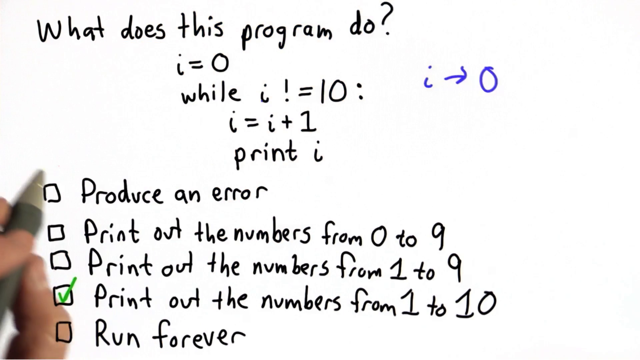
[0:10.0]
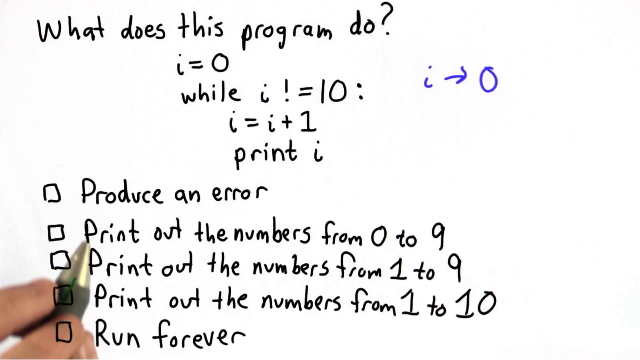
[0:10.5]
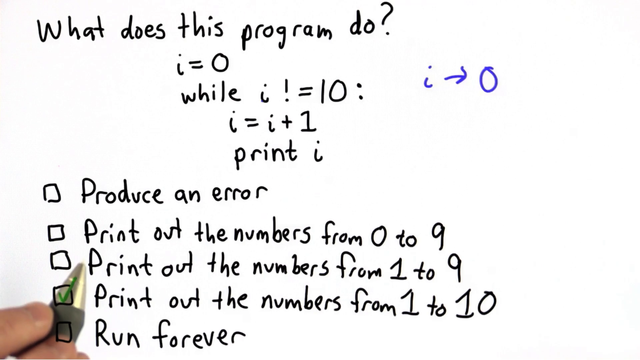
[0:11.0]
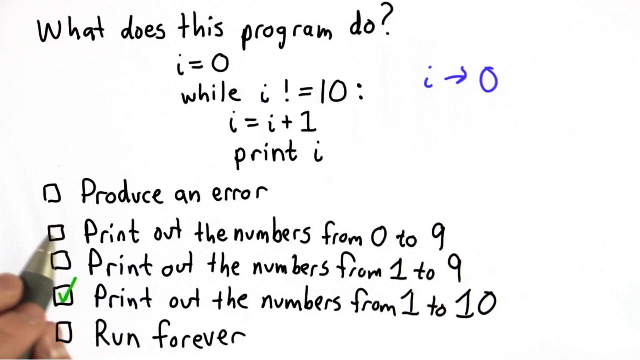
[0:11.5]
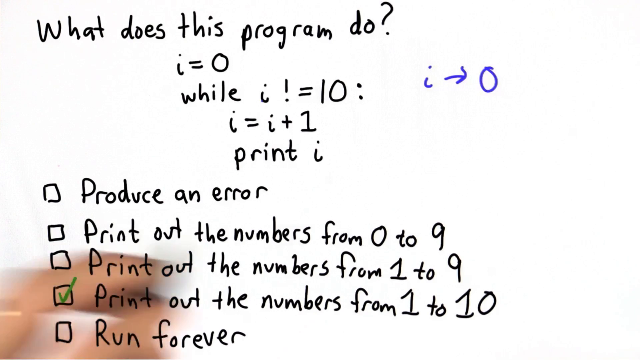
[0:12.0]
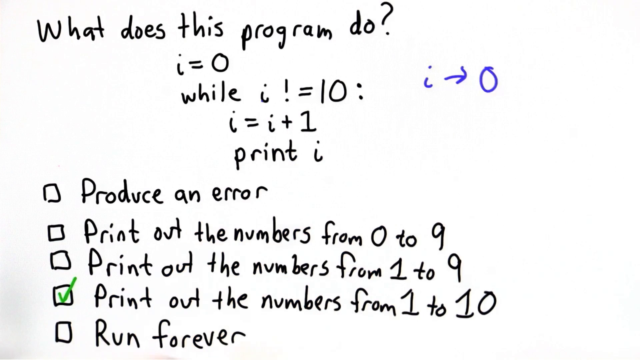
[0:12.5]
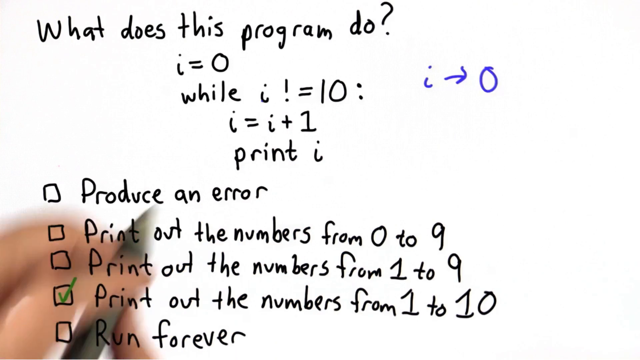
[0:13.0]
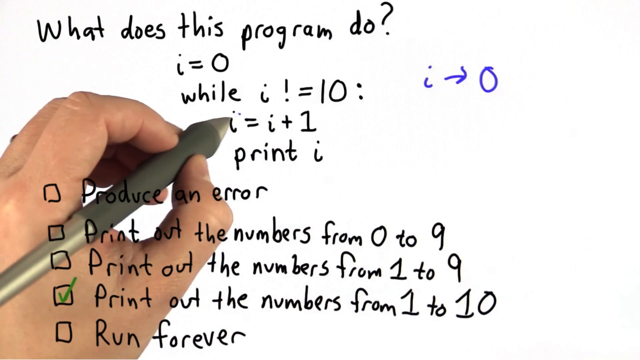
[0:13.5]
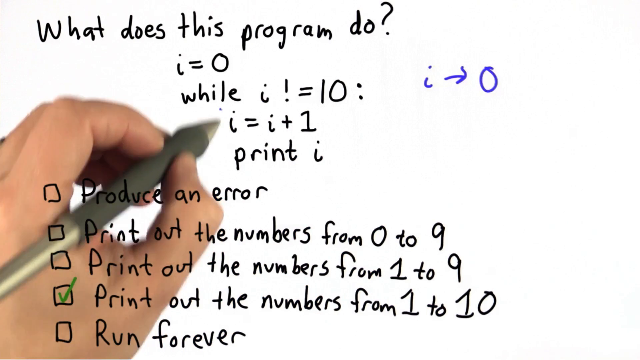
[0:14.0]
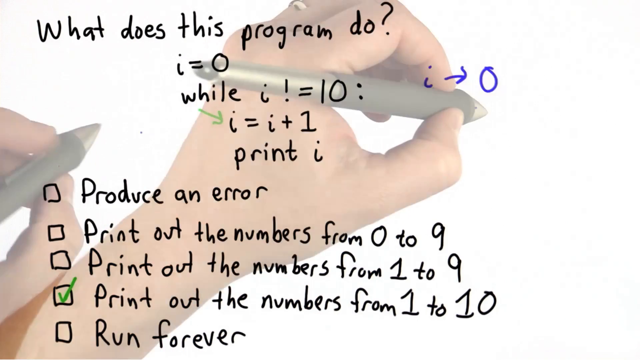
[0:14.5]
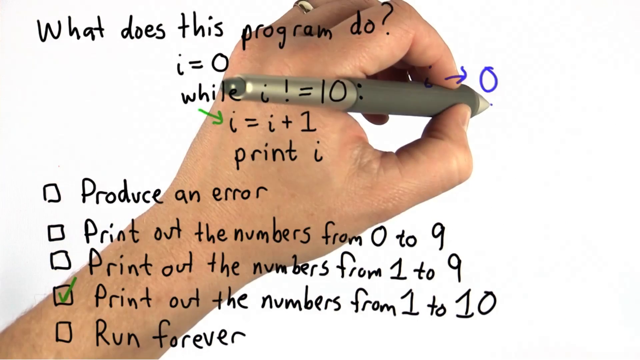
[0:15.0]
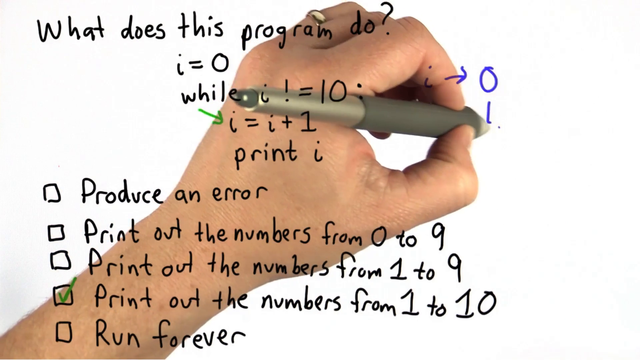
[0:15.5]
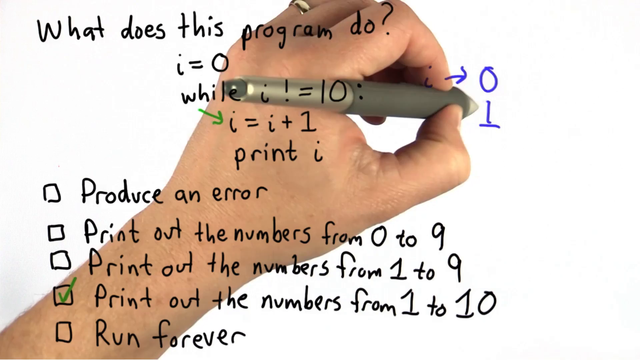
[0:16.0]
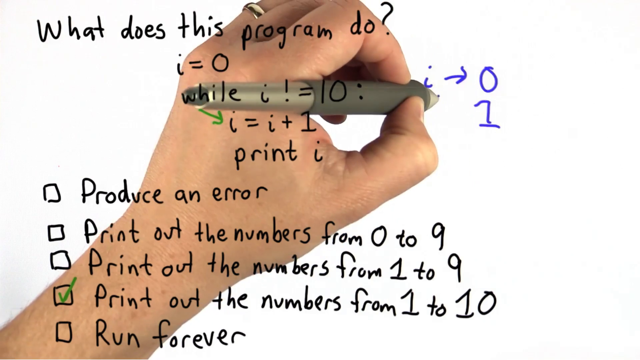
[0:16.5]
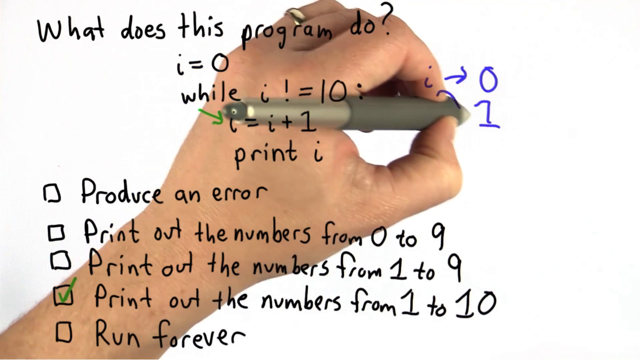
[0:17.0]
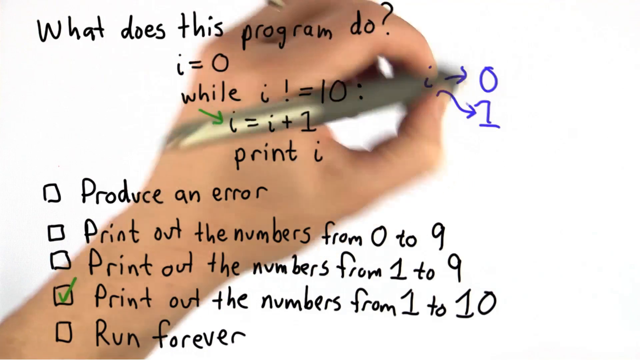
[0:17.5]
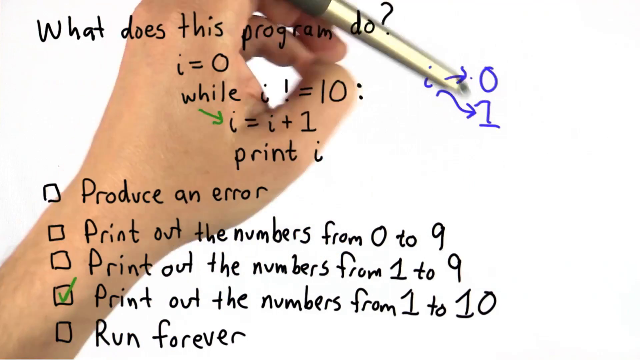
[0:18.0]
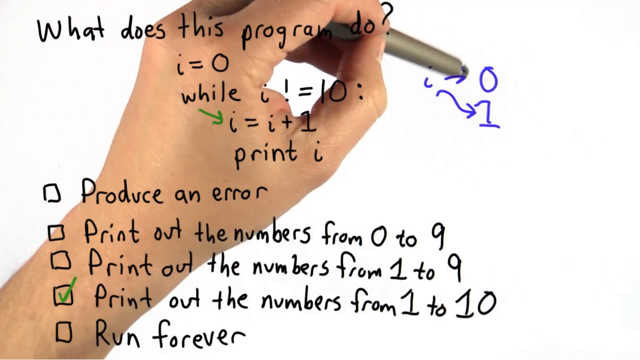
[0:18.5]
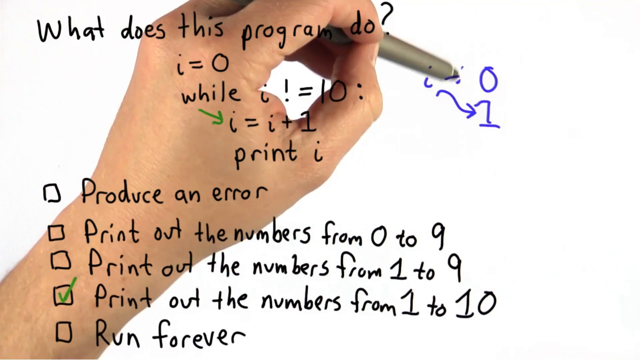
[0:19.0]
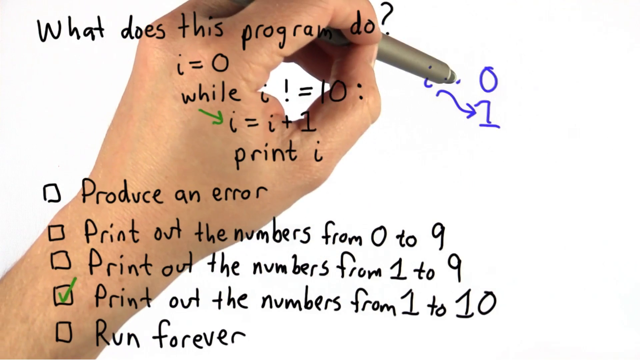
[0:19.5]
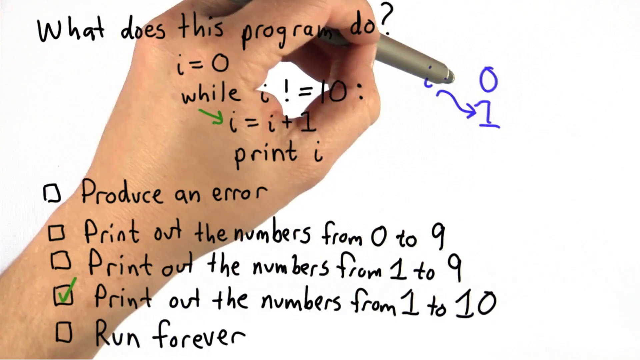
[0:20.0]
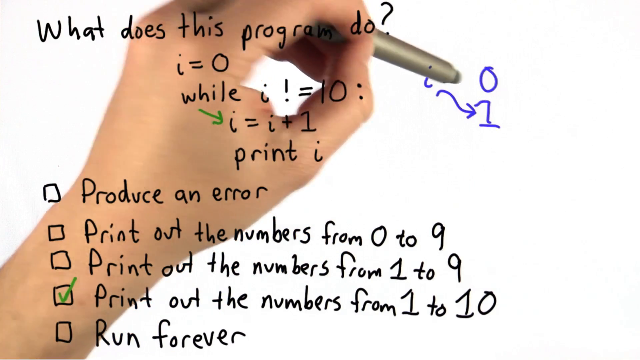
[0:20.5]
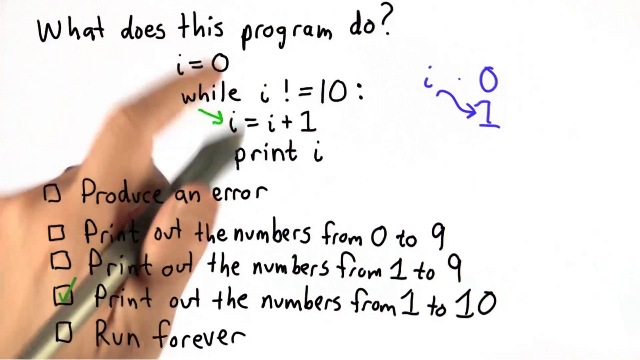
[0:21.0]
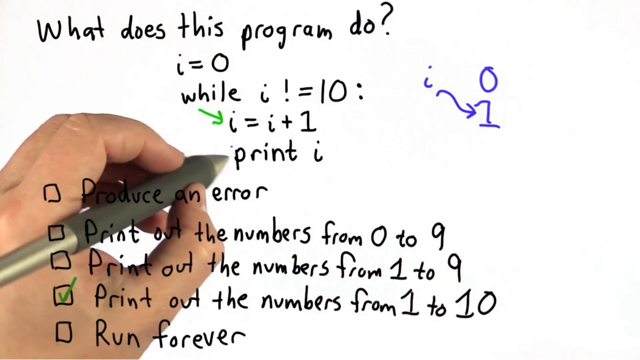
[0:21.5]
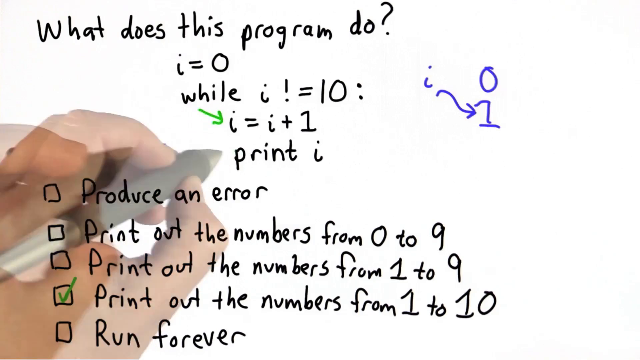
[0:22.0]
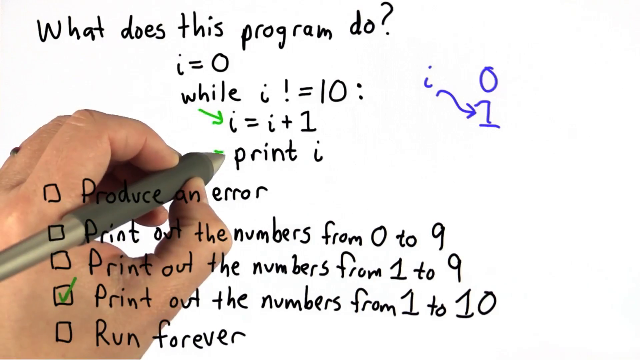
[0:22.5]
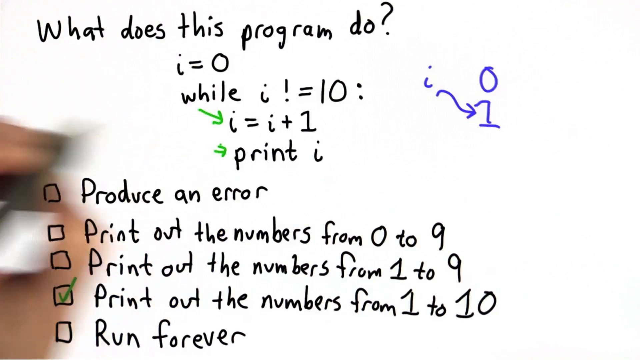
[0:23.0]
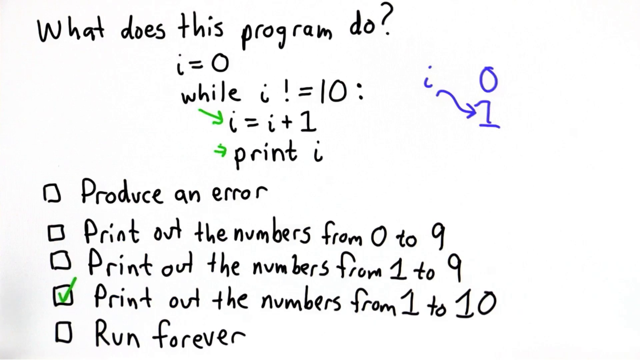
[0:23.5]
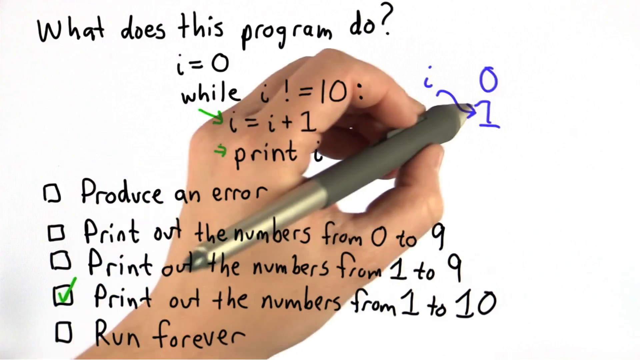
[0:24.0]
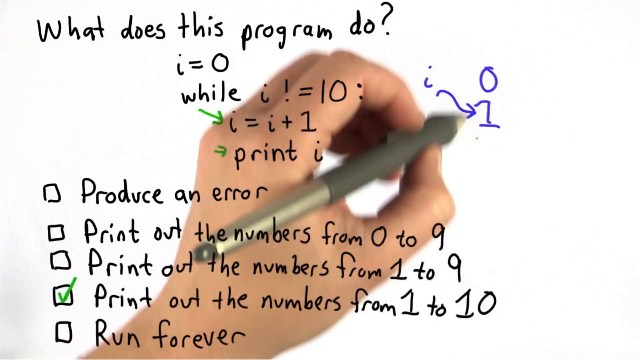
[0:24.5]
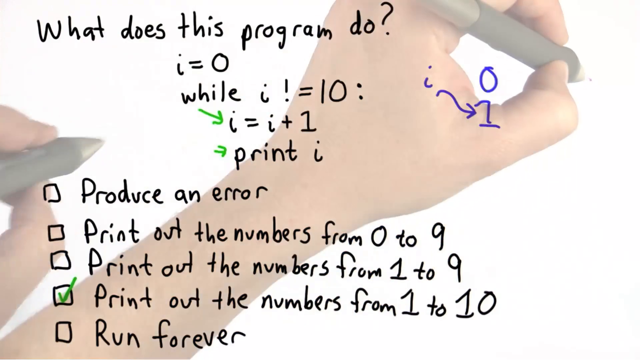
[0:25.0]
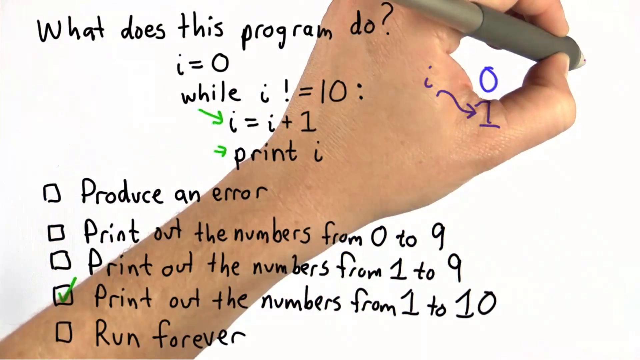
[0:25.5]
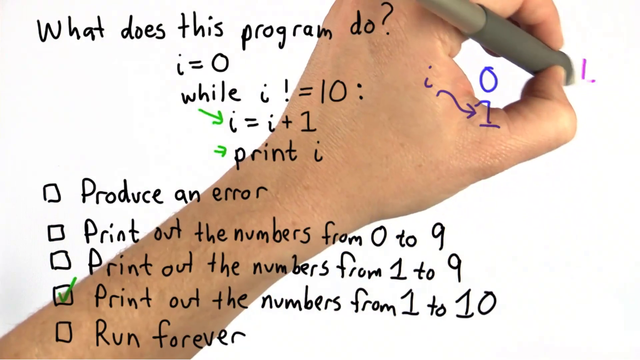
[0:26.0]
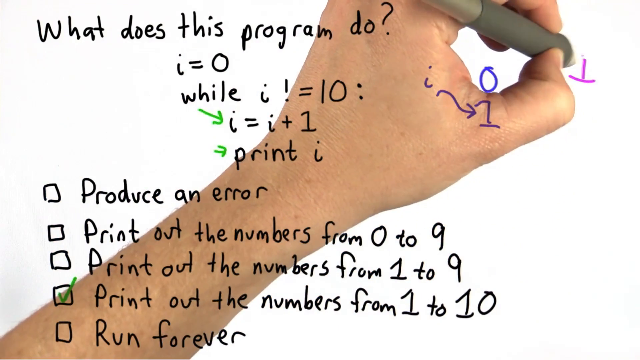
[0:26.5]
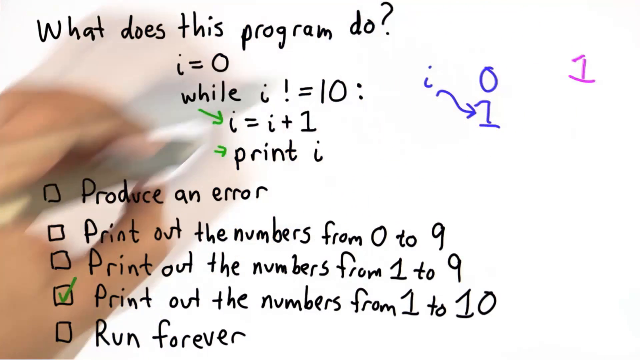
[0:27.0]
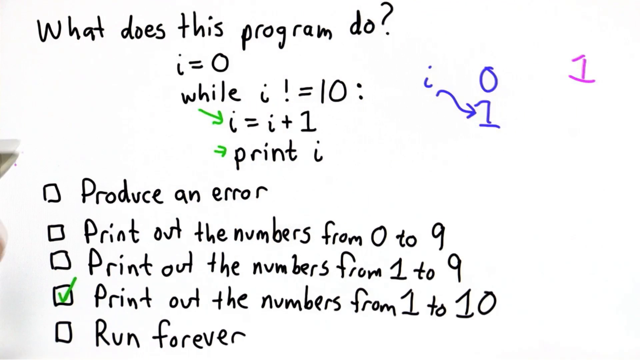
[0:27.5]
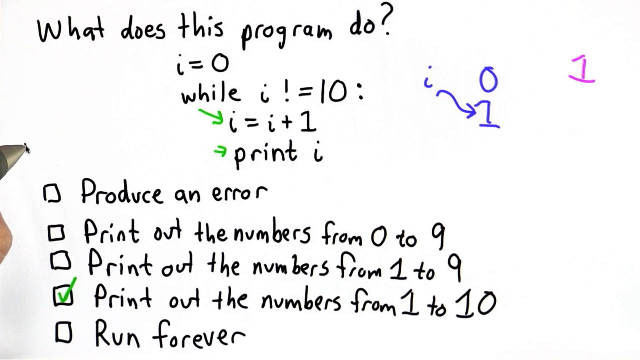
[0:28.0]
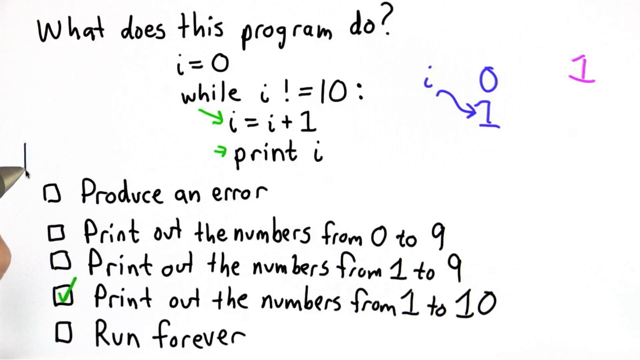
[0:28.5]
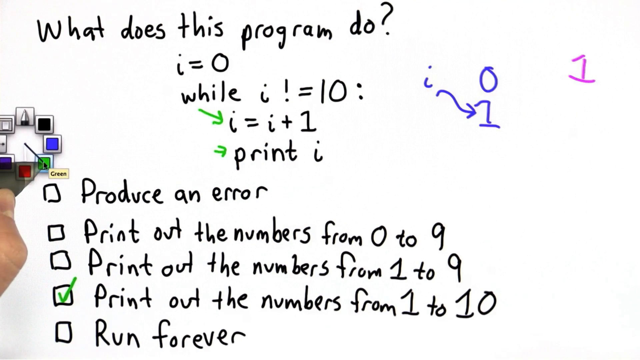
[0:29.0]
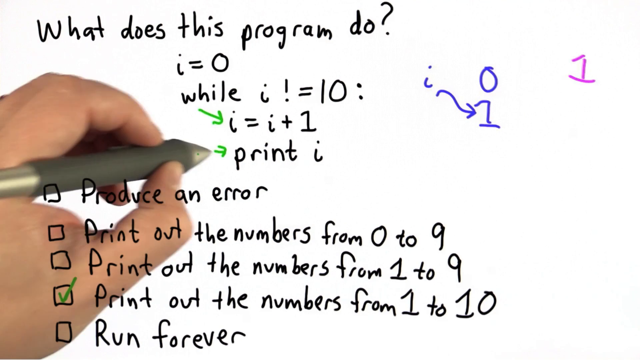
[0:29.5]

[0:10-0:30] The problem is handwritten in black pen on a white background: "what does this program do? i = 0 while i != 10: i = i + 1 print i". Handwritten boxes on the left-hand side read "produce an error", "print out the numbers from nought to nine", "print out the numbers from one to nine", "print out the numbers from one to ten" and "run forever". The fourth box, "print out the numbers from one to ten", has a green tick as the answer. In the top right-hand corner are a blue i, a blue arrow and a zero. The pen and fingers move over the green tick on box four, then the pen writes an arrow highlighting the i in "i = i + 1". In blue, the pen writes underneath the blue i, arrow and zero another swirly arrow coming from the i, and writes a one underneath the zero; the swirly arrow points down from the i to the one. The pen then rubs out the arrow from the i to the zero, leaving the i with a swirly arrow to the one and nothing going to the zero. In green, the pen writes an arrow before the black "print i". The hand circles the blue 1 without leaving a mark. In purple, the hand writes a 1 further along on the right, near the blue zero. A colour wheel appears in black, the pen changes to green, and everything green is deleted apart from the green tick on the fourth box.